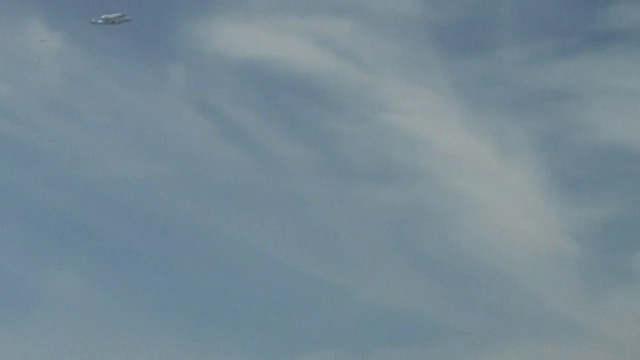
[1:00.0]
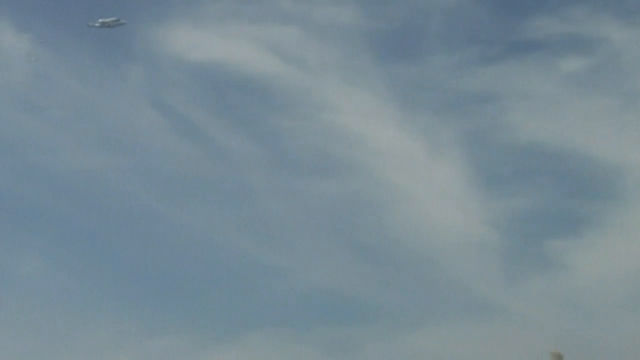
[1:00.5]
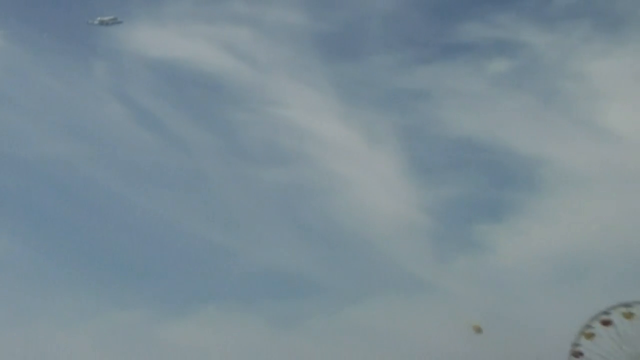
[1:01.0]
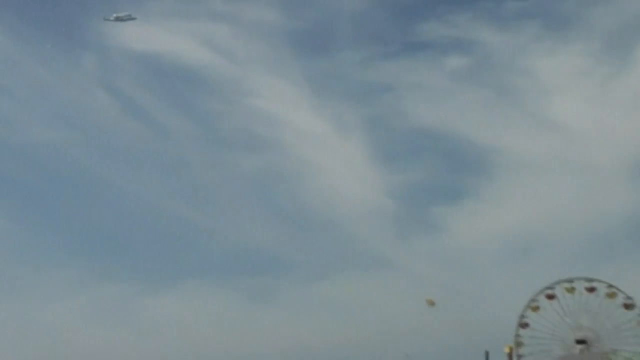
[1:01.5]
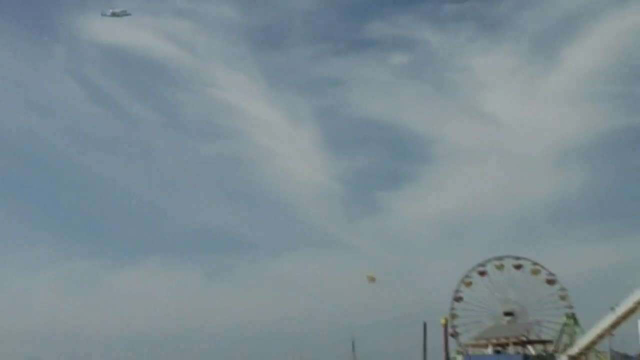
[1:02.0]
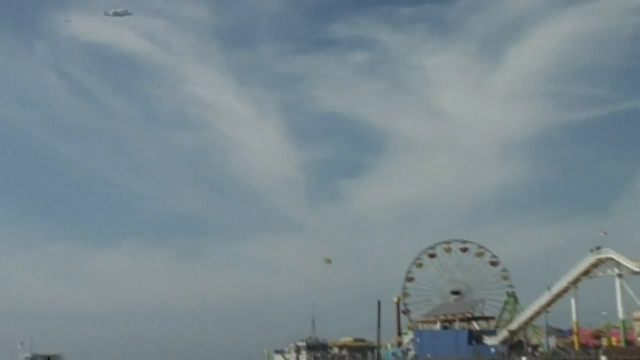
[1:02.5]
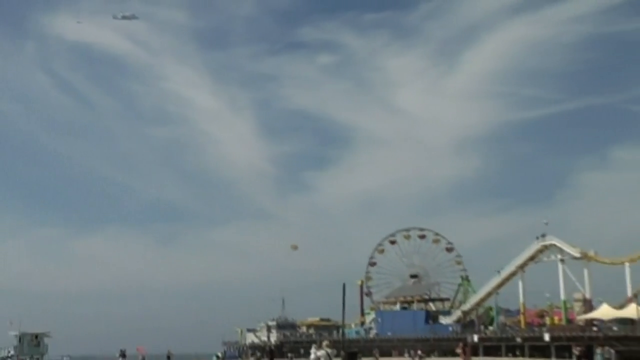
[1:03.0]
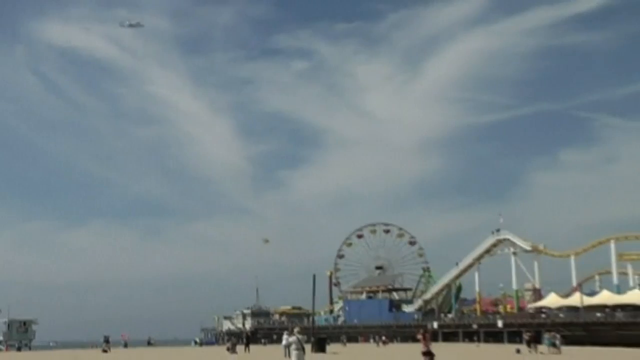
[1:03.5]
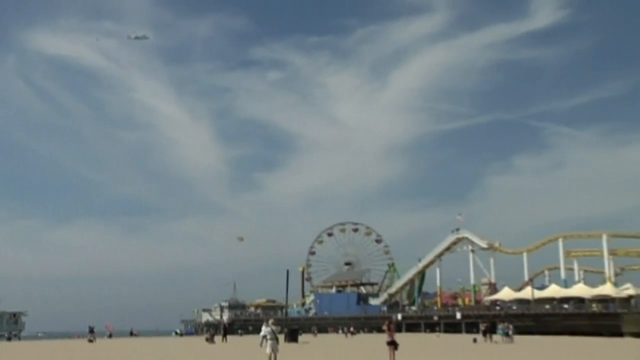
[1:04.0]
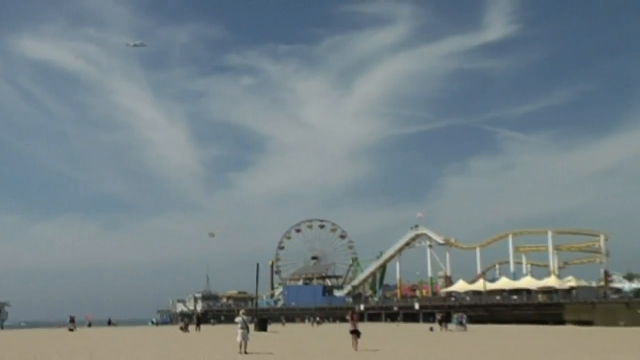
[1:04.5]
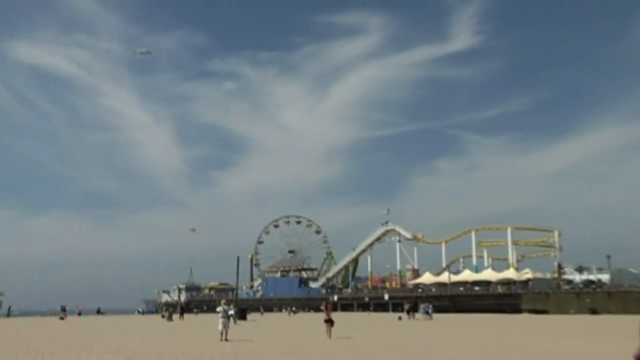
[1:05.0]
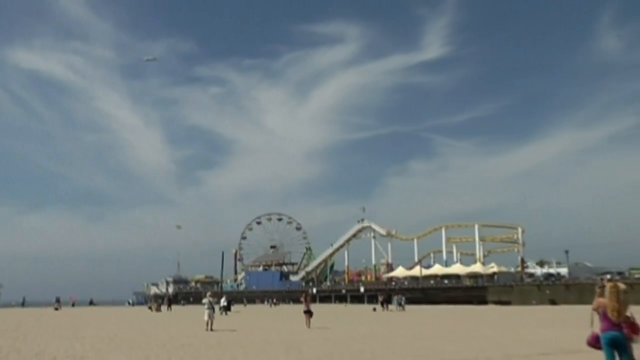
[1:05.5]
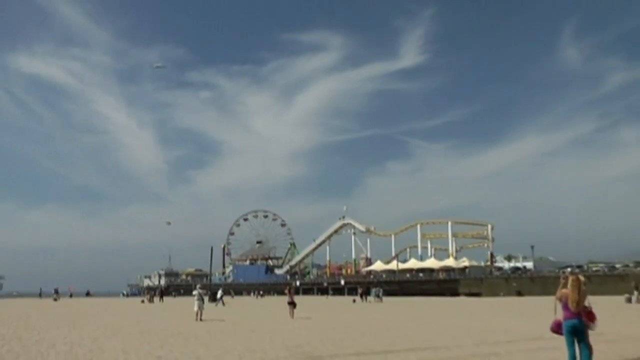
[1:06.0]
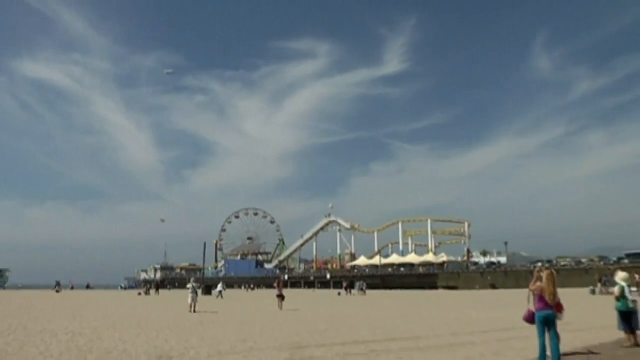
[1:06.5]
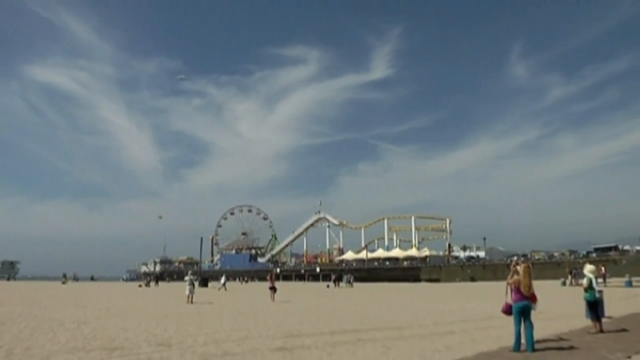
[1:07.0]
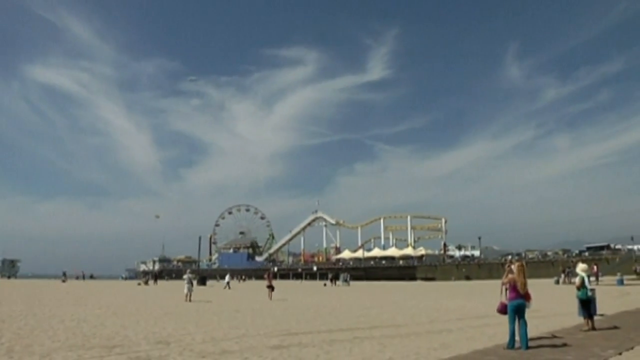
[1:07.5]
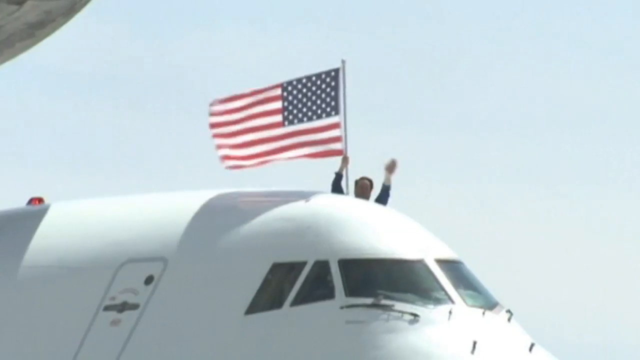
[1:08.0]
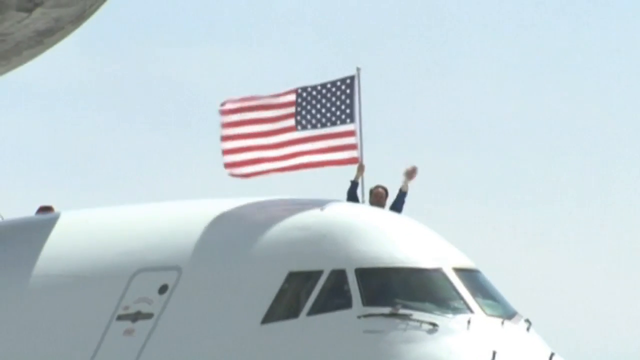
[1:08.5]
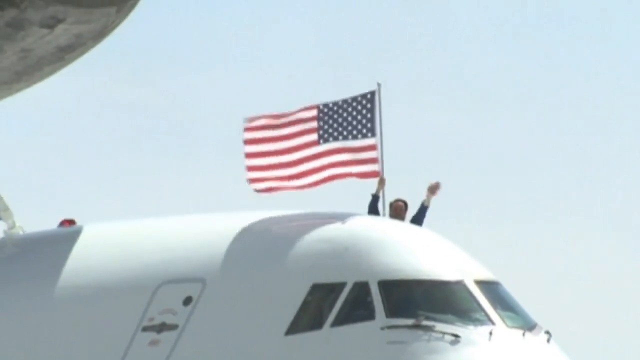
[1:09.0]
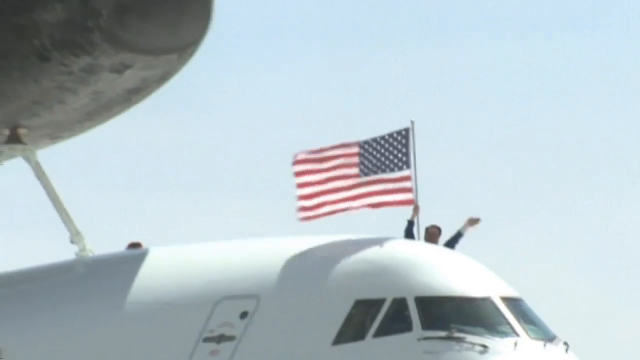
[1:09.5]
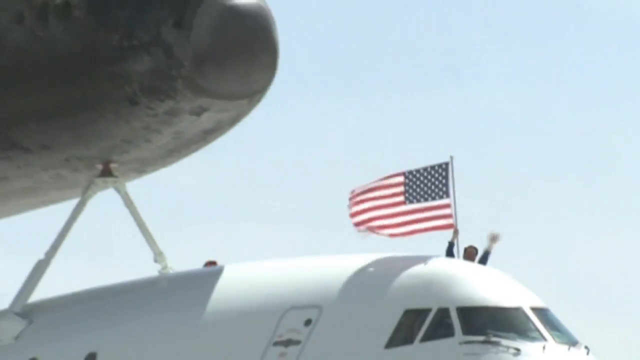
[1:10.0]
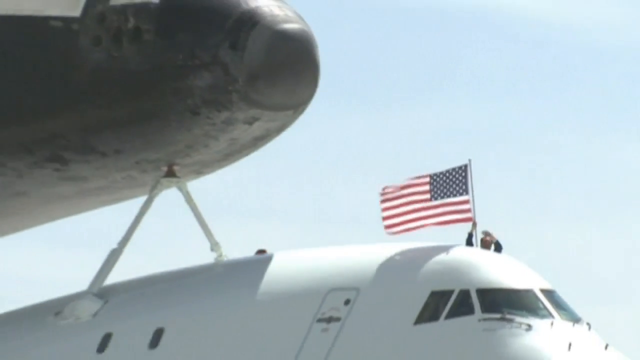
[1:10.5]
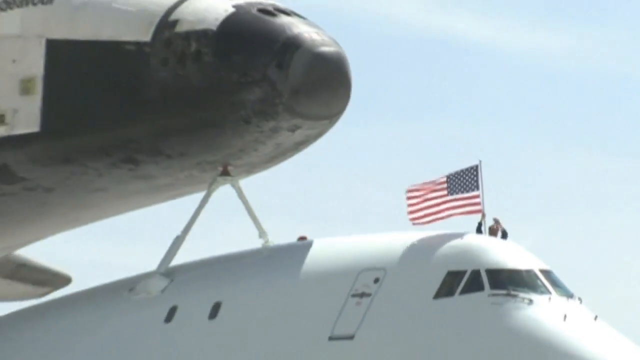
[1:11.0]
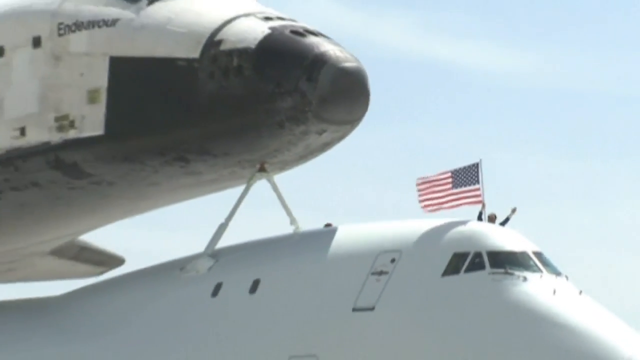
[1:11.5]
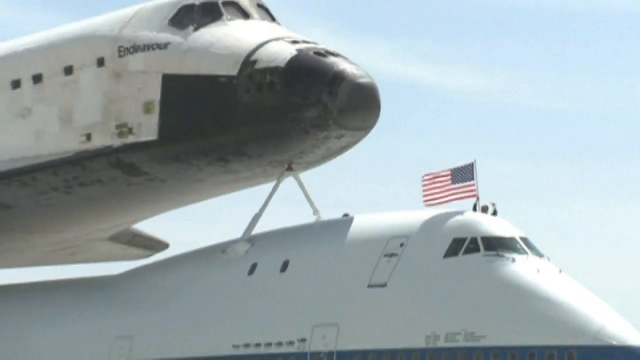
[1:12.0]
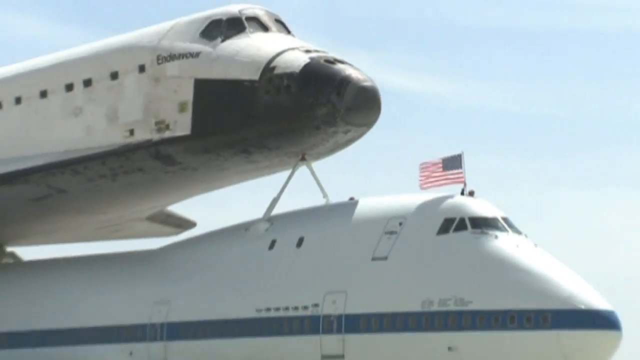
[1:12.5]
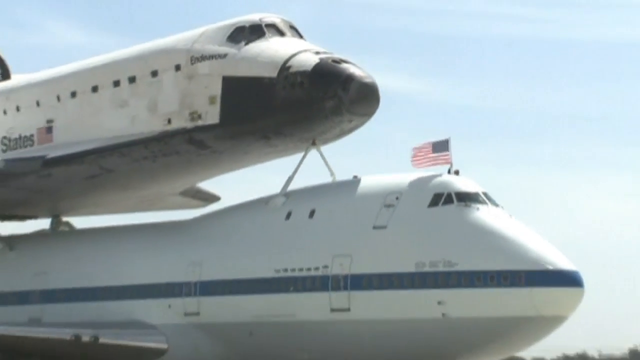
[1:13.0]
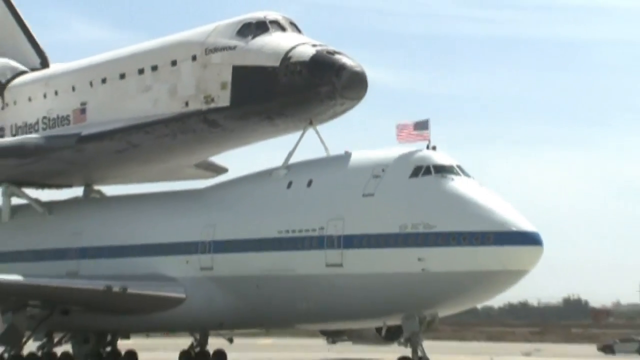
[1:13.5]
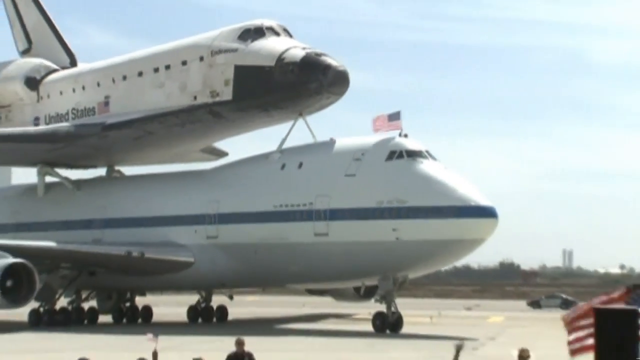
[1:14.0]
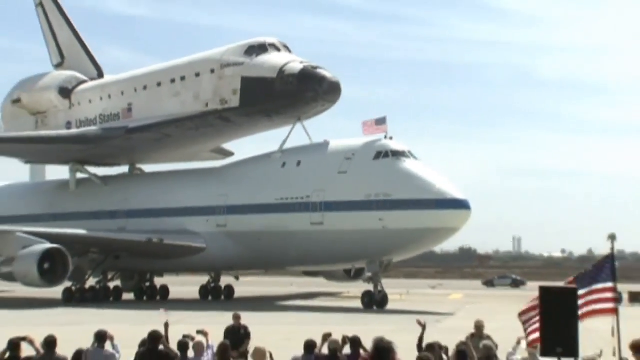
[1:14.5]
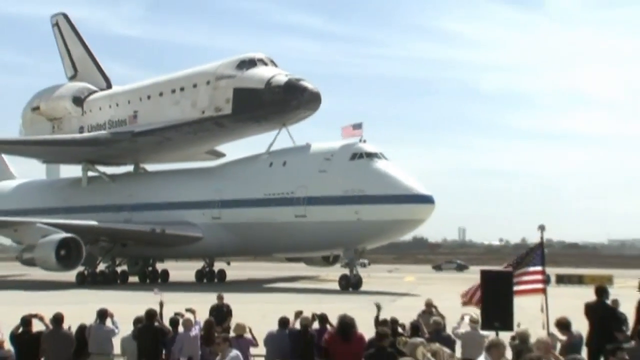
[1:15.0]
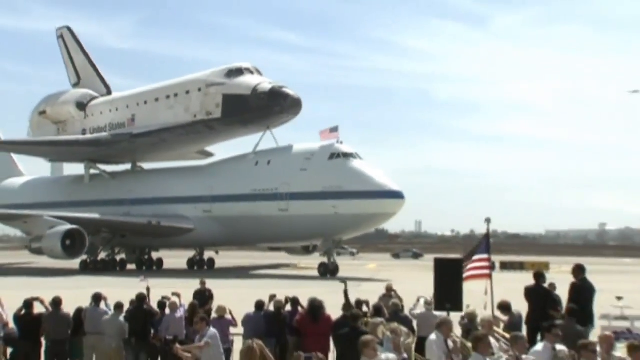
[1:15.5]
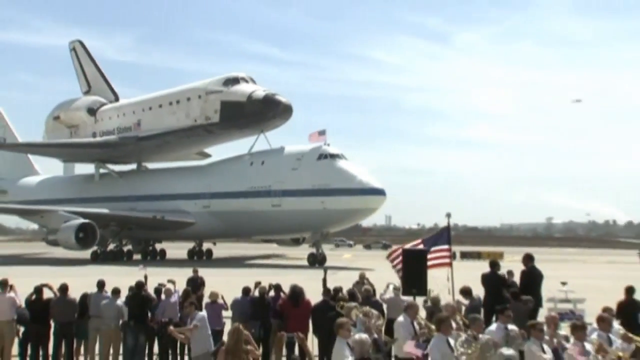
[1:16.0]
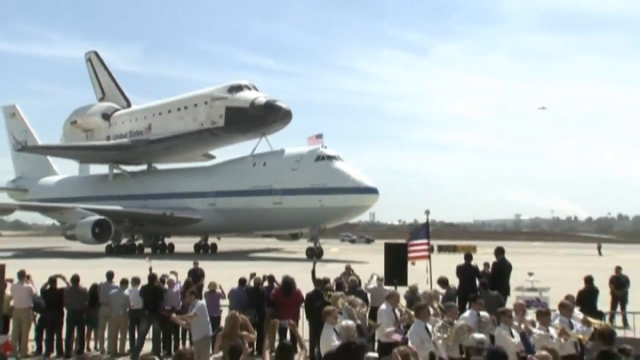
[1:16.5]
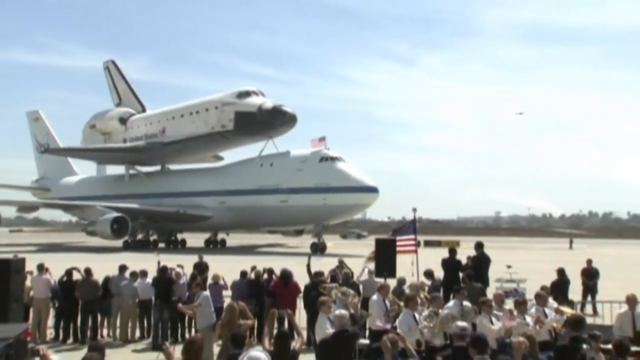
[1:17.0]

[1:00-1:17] The space shuttle is pretty high up in the clouds, blending in a little with the whitish clouds, and it is not possible to make out whether anything is following behind it. The scene then appears to be part of L.A., with a Ferris wheel on a pier. Various people stand around the beach looking up. In the bottom right corner a lady, seemingly with a purse around her arm, is videotaping. There is also an older lady, apparently in a green dress with a green bag. People tilt their heads up to look at the shuttle. A guy holds a flag and waves it; he is on the far side of the plane, and it is unclear whether he is standing on a platform or has his torso out of a window. He waves to the onlookers as the plane is wheeled back to the runway. People wave flags and clap. In the far distance, a car moves parallel to get in position.